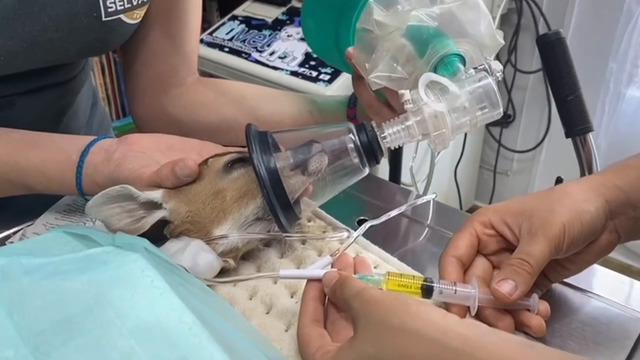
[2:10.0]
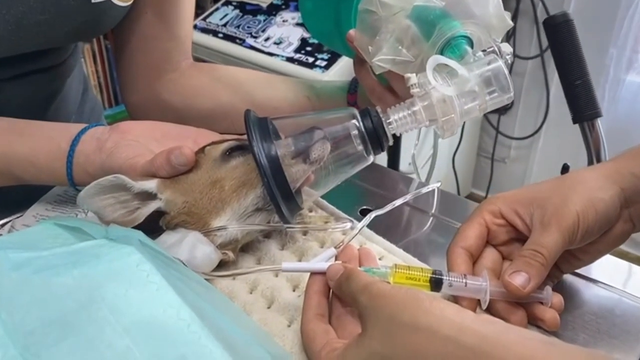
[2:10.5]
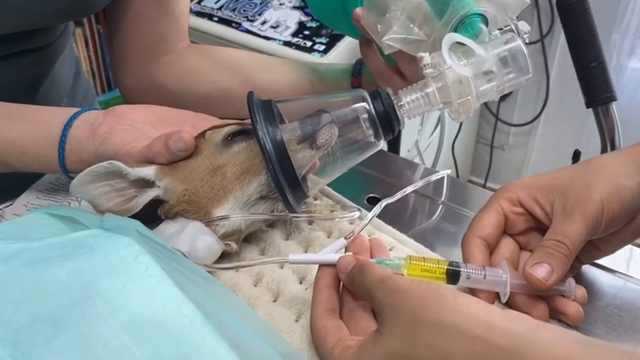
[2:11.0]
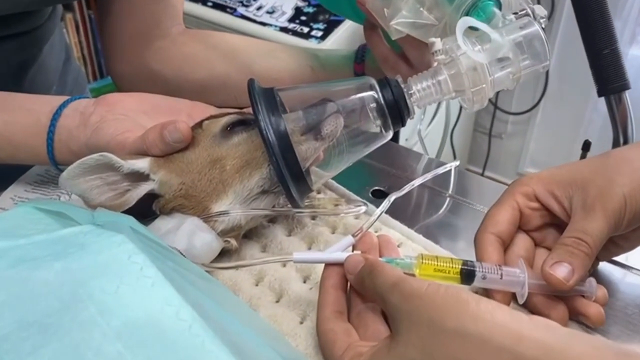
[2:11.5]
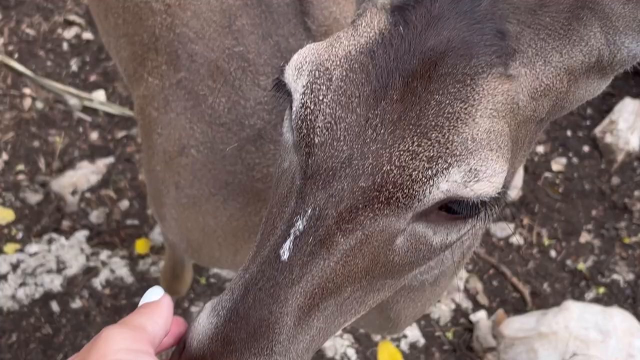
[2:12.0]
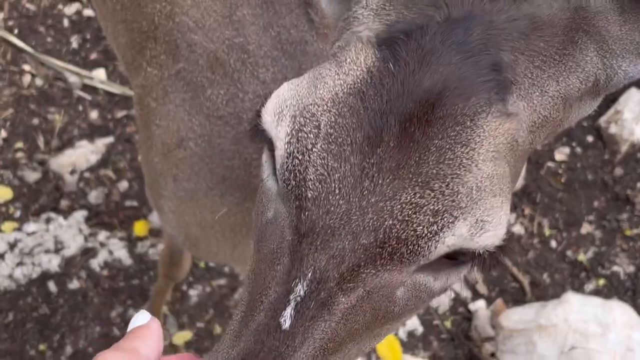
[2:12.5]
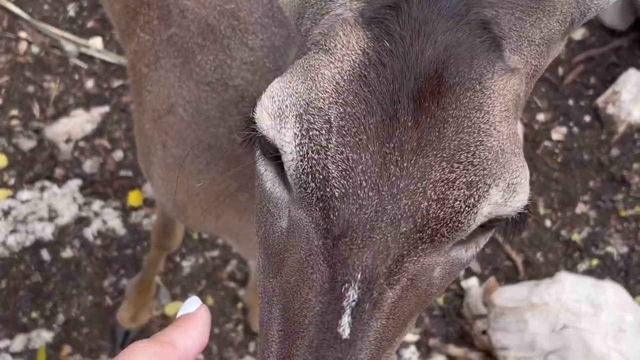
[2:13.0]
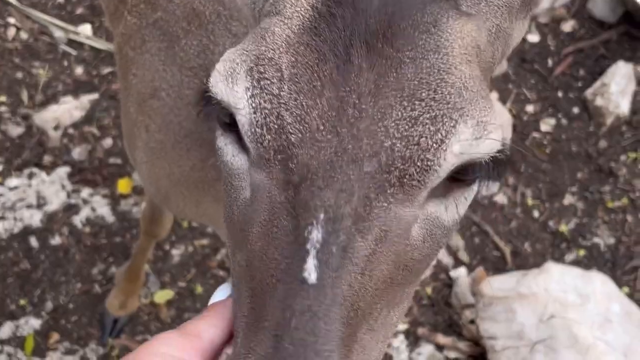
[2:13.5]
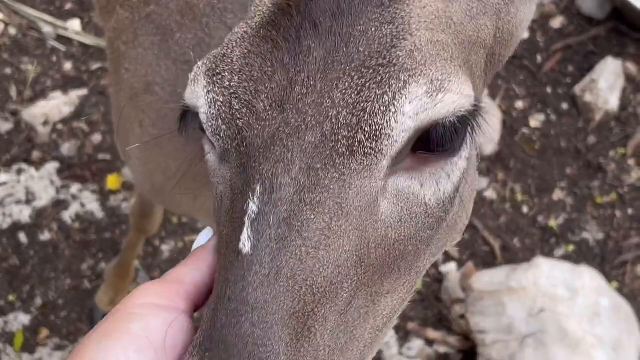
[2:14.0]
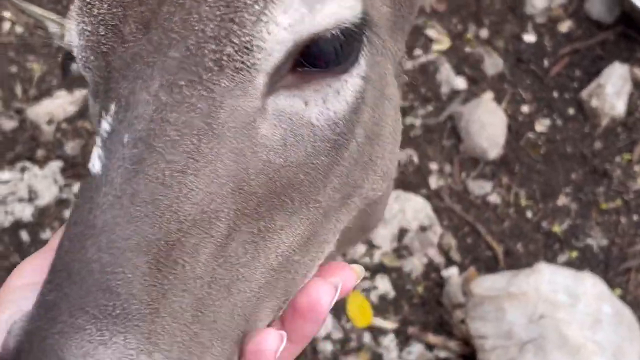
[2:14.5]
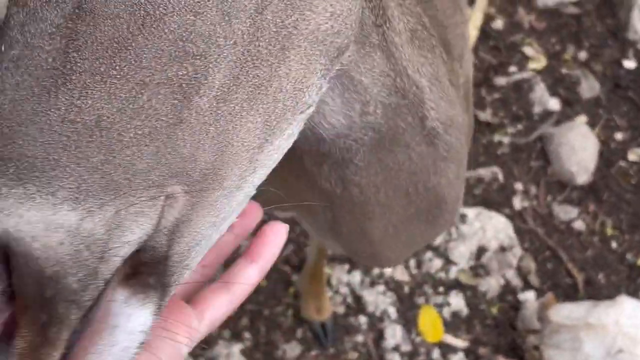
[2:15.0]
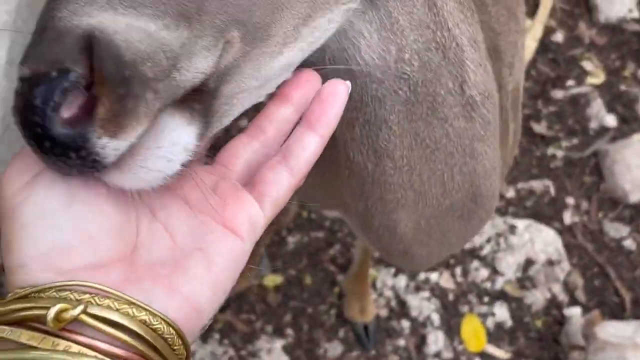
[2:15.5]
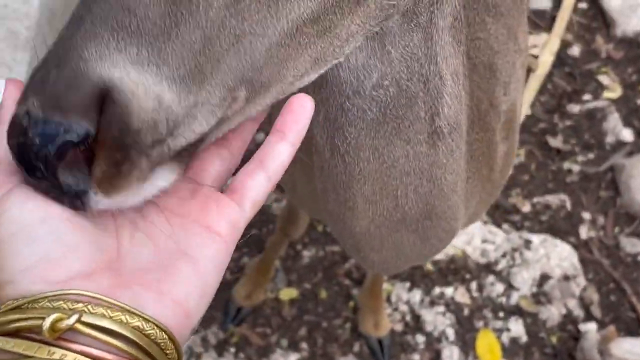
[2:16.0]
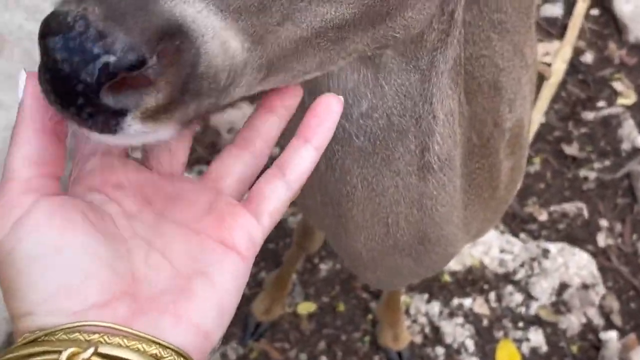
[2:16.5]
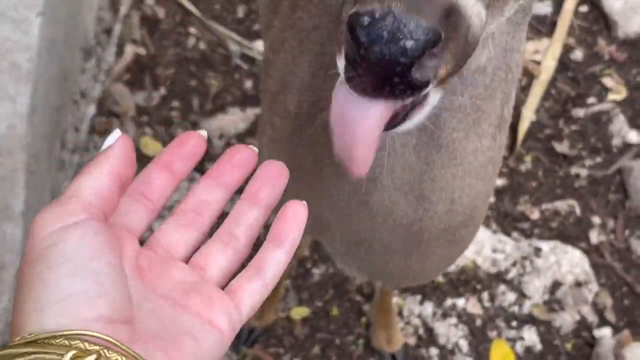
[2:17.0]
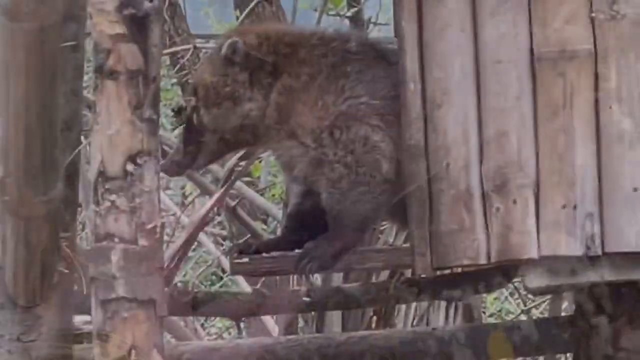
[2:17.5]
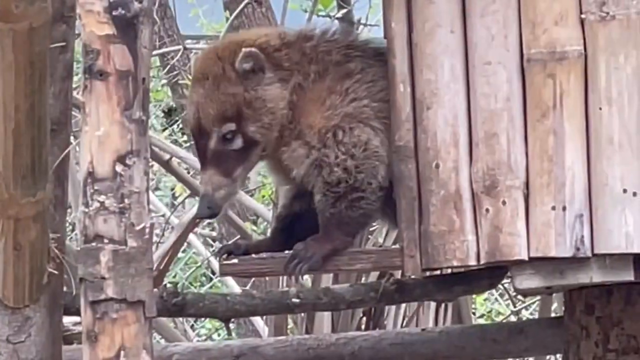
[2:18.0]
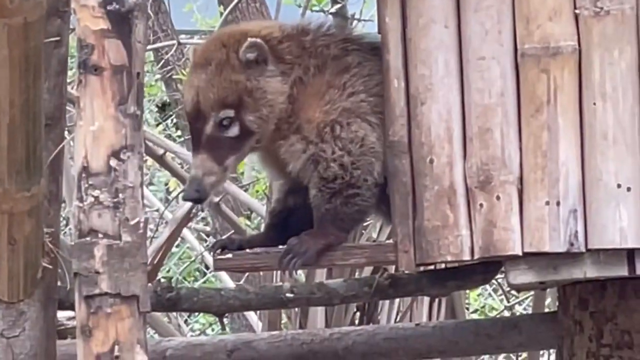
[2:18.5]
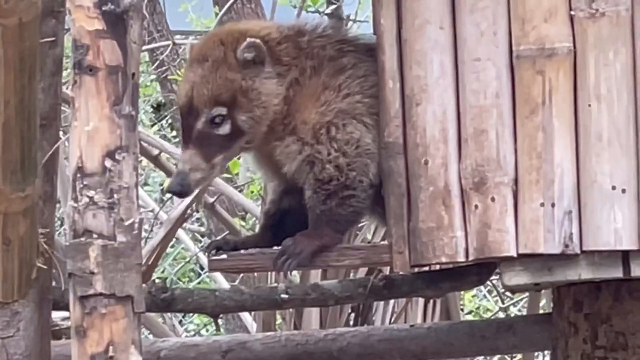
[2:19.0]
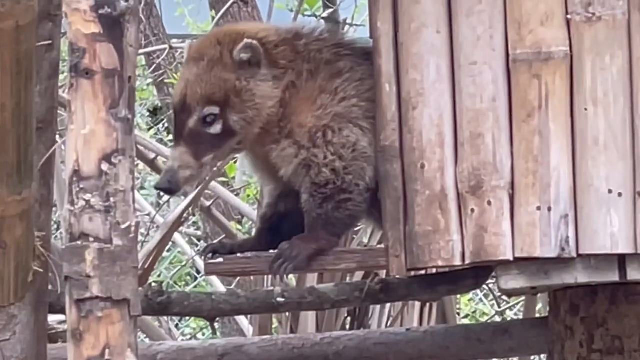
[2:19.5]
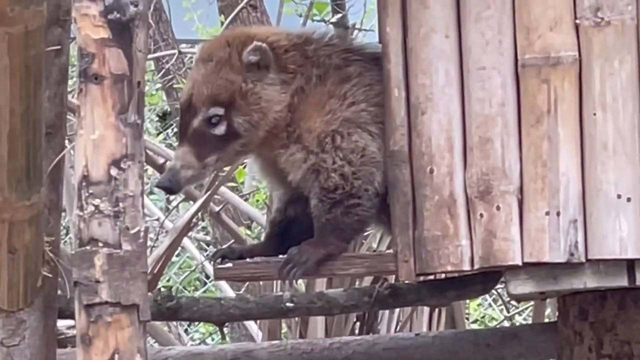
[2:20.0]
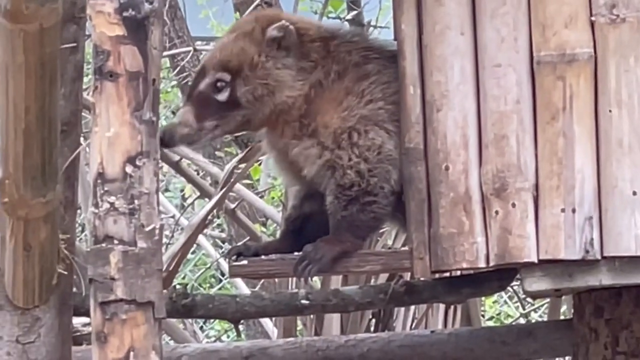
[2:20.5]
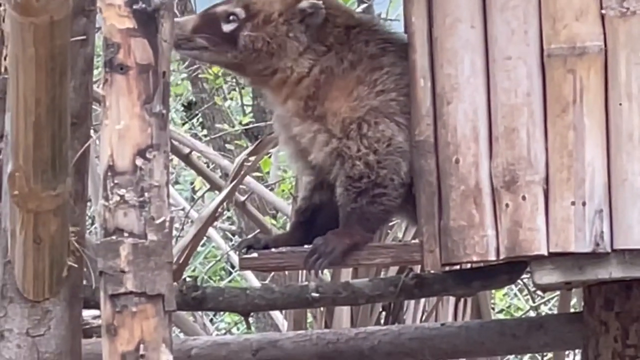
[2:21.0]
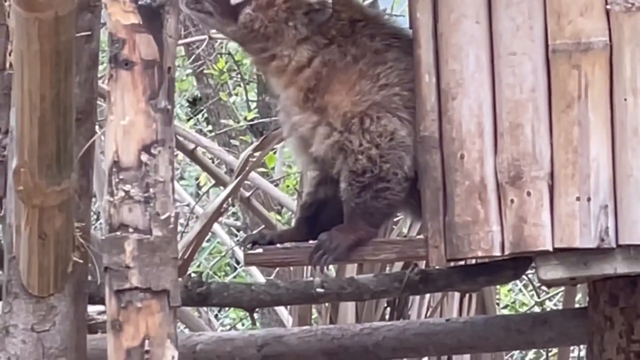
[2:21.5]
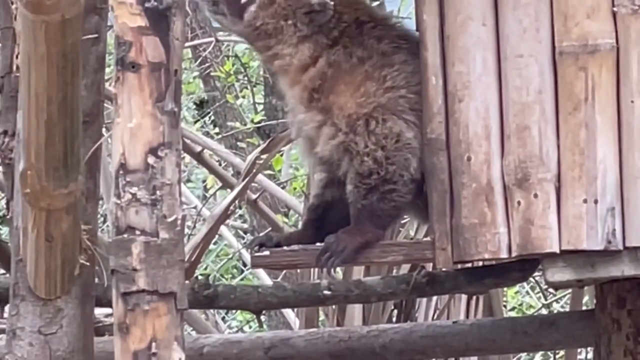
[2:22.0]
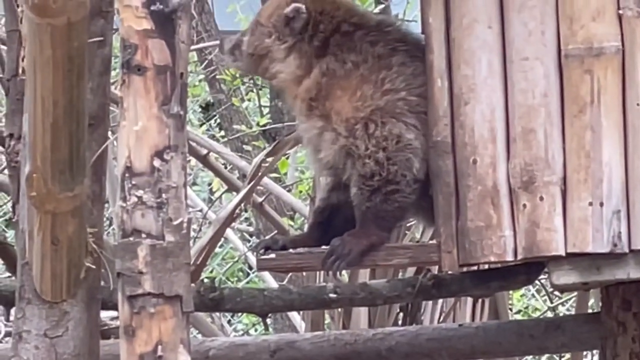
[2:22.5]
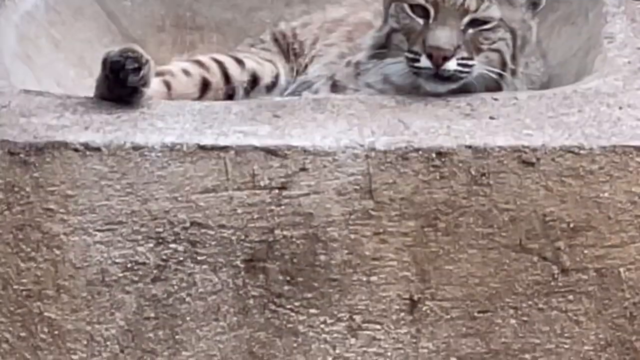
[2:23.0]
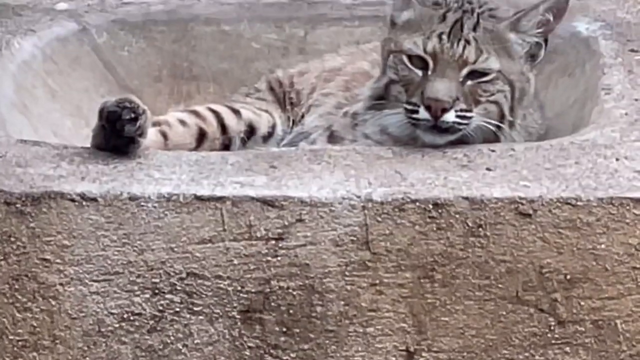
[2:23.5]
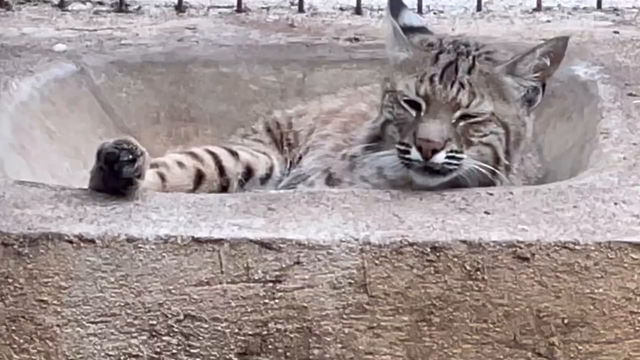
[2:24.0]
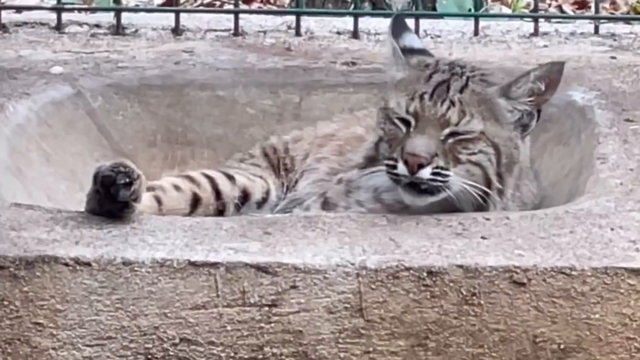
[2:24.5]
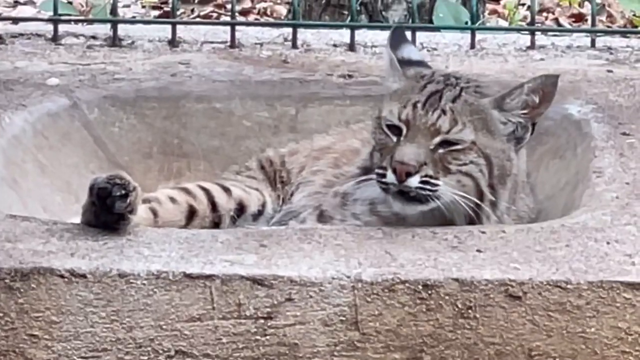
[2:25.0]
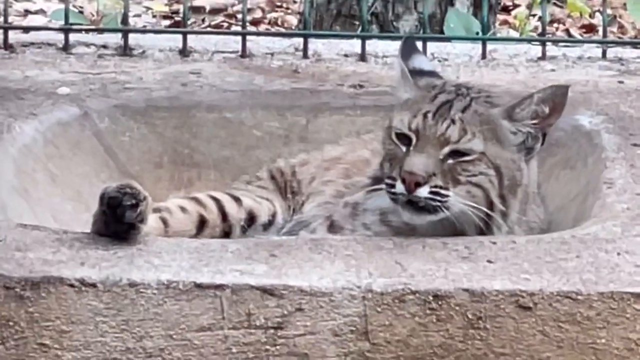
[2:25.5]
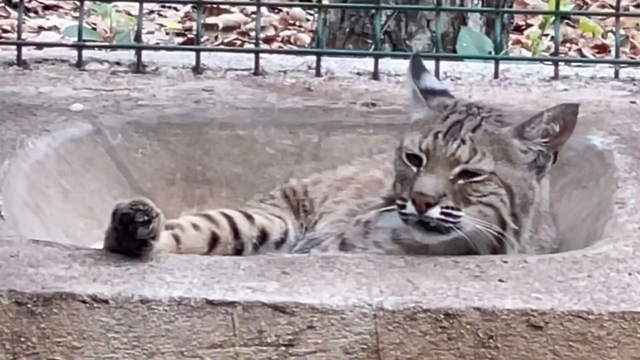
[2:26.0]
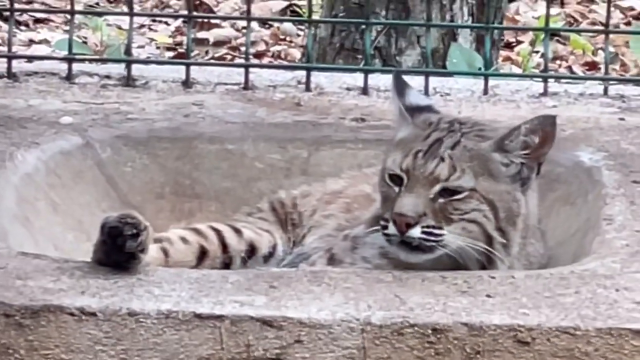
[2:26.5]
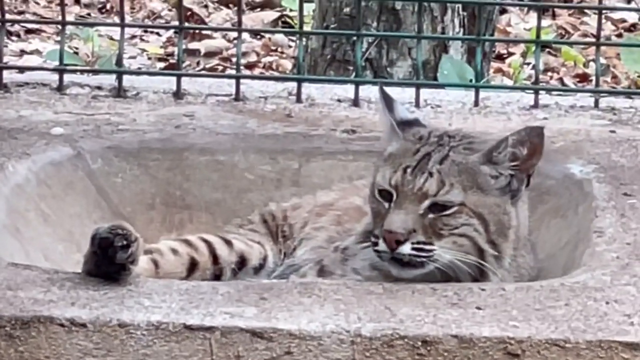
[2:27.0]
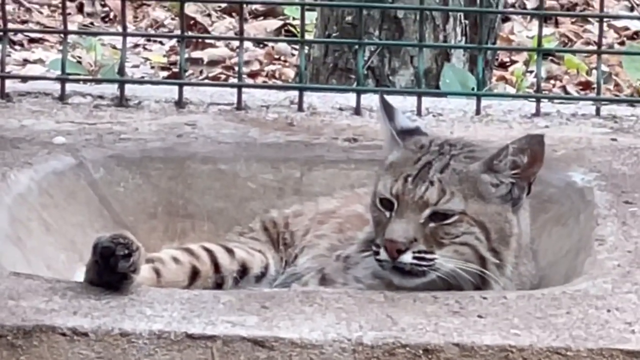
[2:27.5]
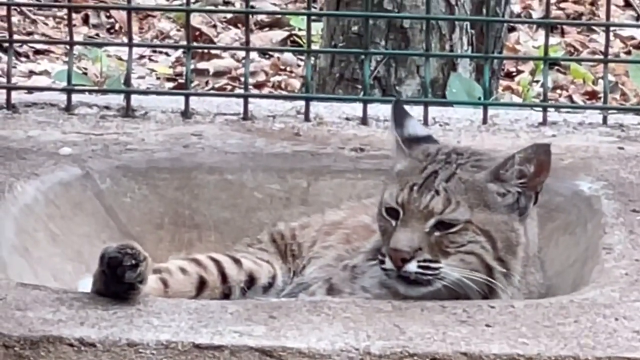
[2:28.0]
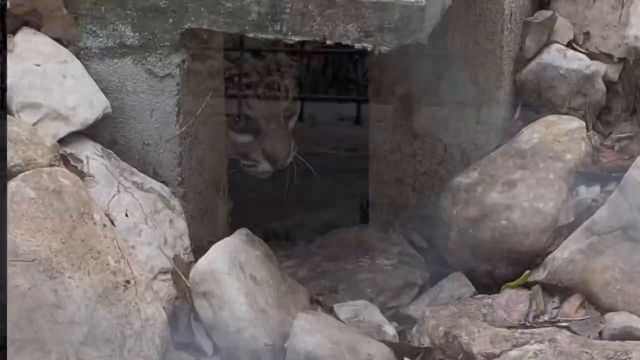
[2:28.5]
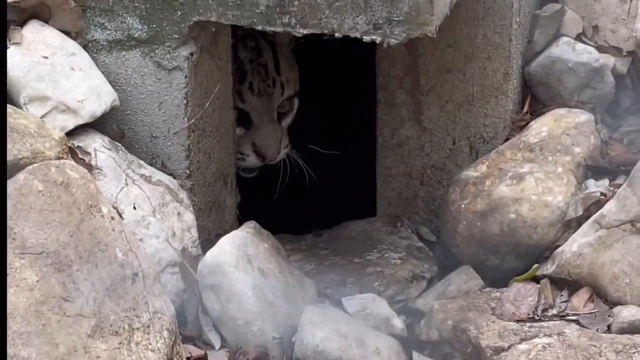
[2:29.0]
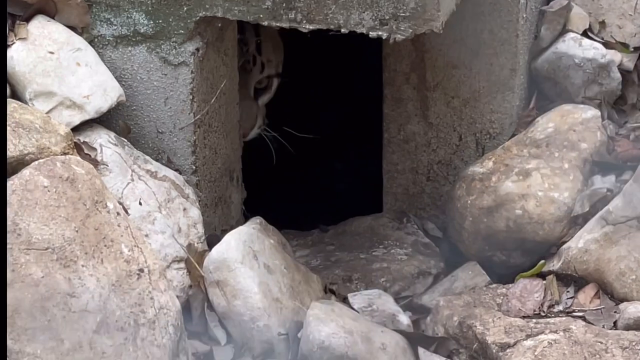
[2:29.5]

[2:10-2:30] Different kinds of animals are treated by a group of people. Some kangaroos are put on oxygen and given injections. The team shows the animals and plays with them. Raccoons and cats appear restless and very sick, and they are treated and given medications and injections as the team tries to rescue them.